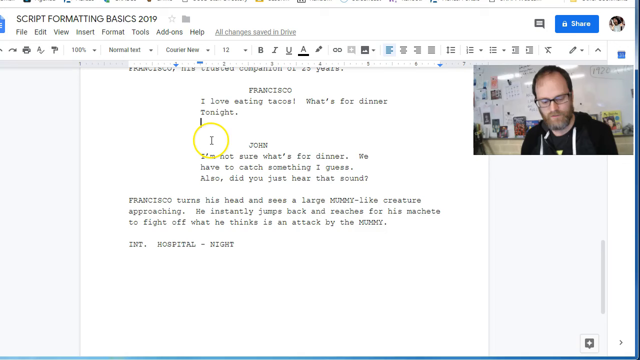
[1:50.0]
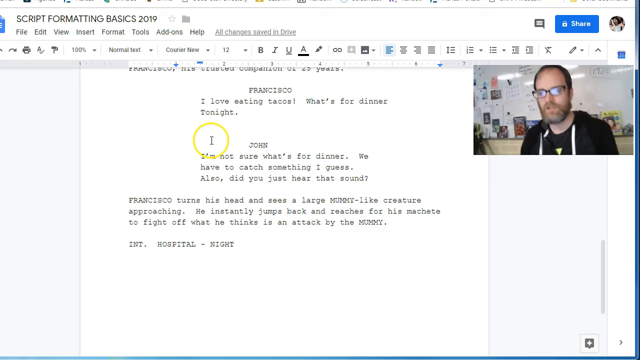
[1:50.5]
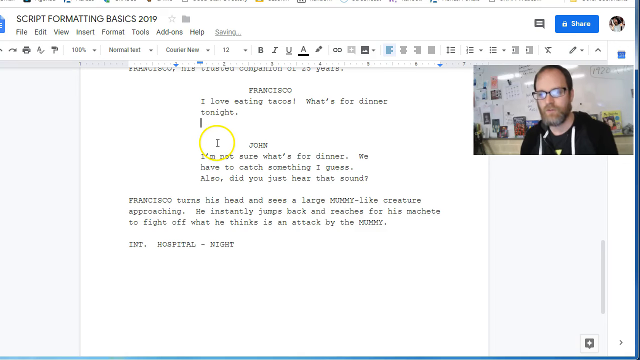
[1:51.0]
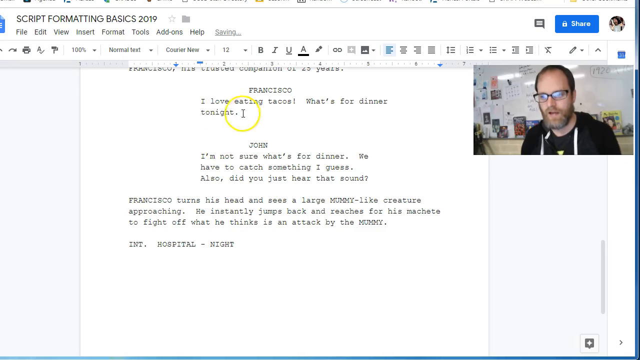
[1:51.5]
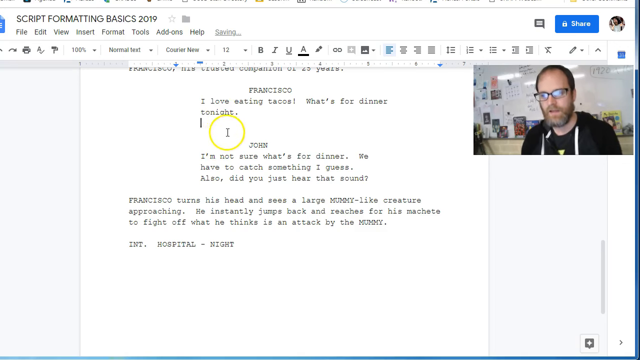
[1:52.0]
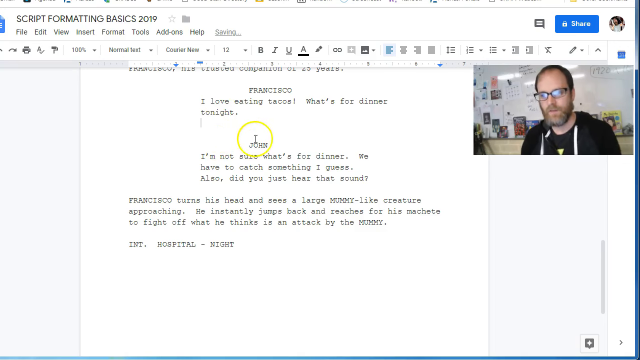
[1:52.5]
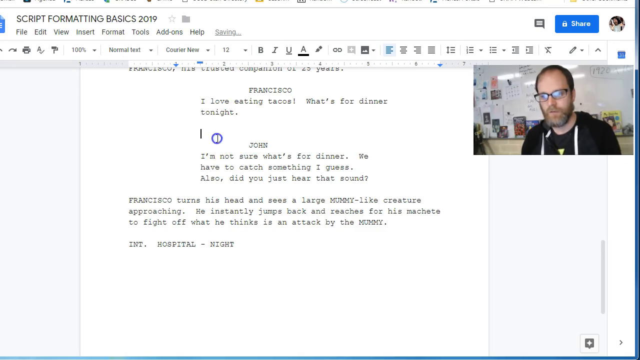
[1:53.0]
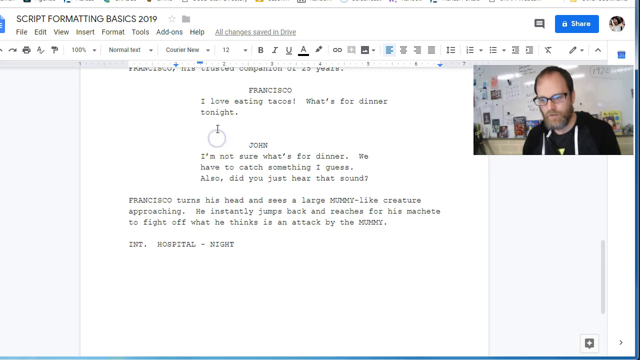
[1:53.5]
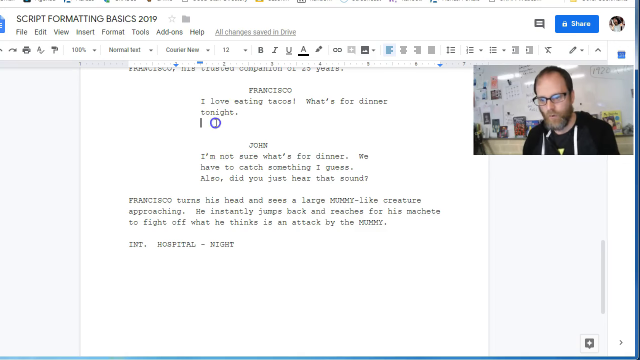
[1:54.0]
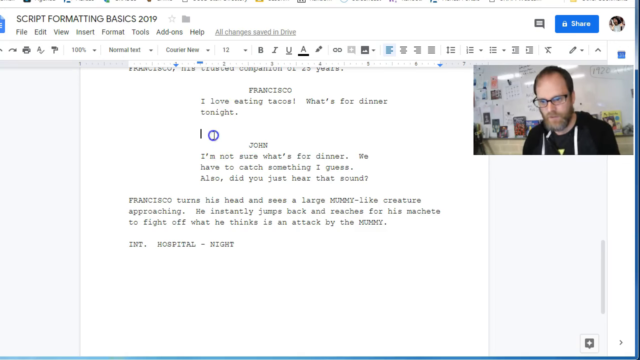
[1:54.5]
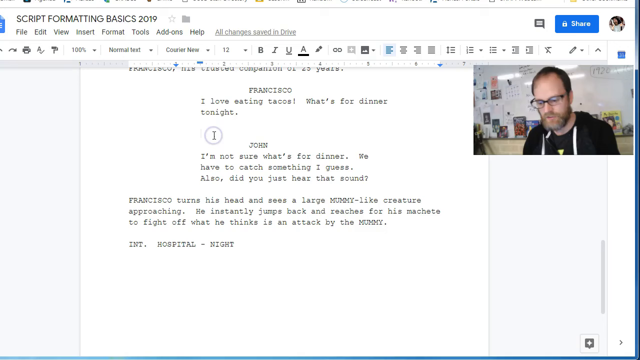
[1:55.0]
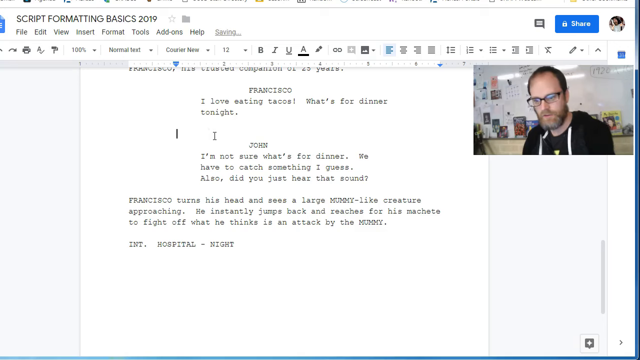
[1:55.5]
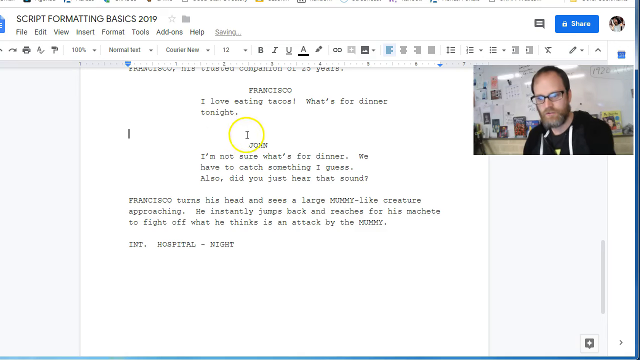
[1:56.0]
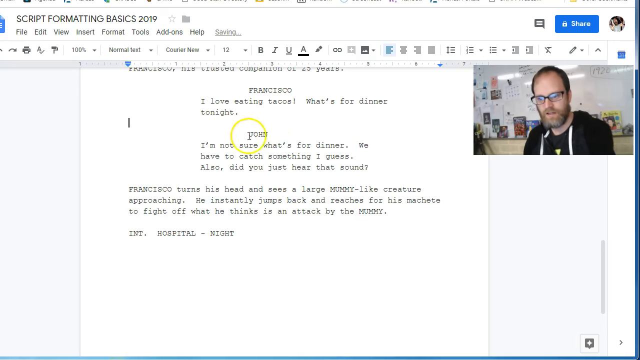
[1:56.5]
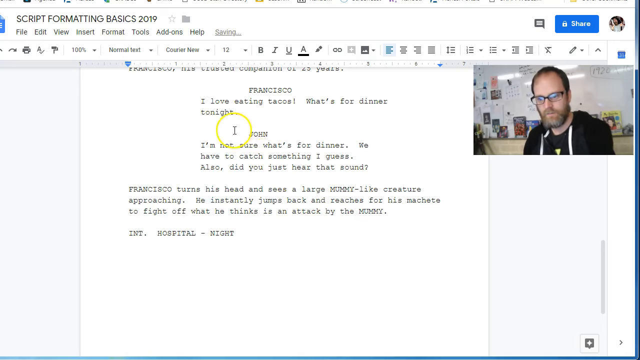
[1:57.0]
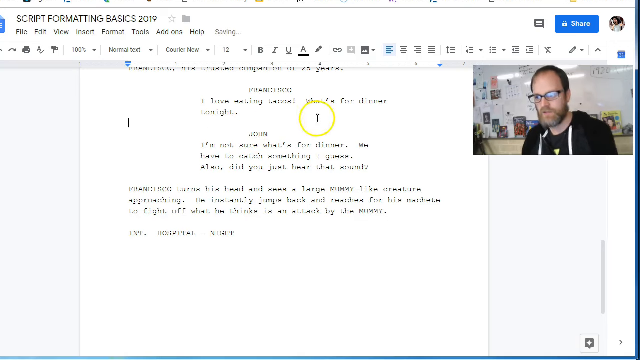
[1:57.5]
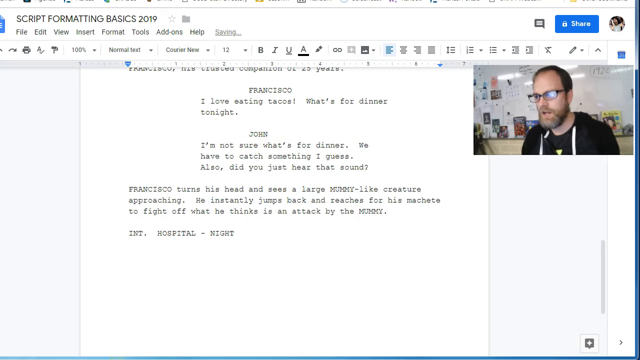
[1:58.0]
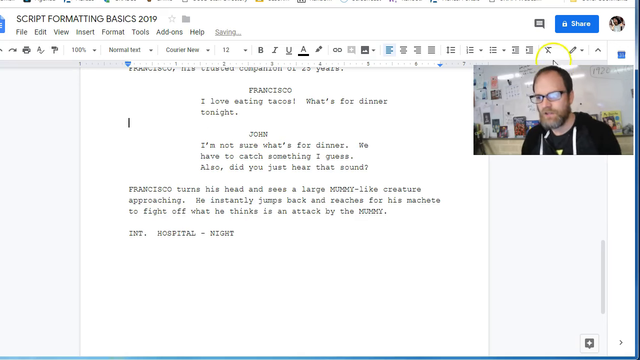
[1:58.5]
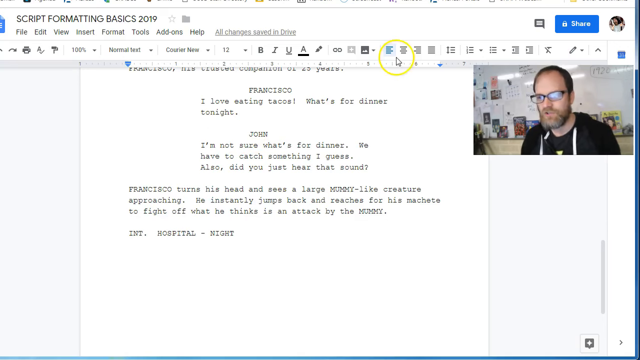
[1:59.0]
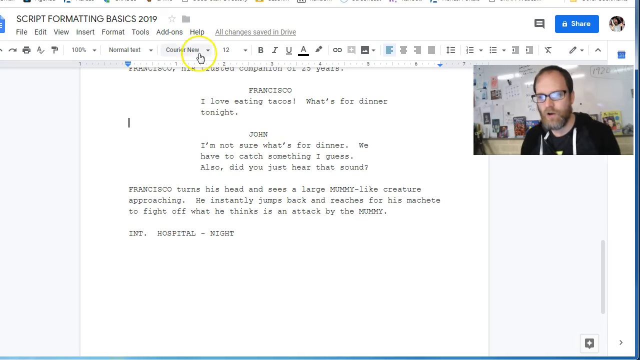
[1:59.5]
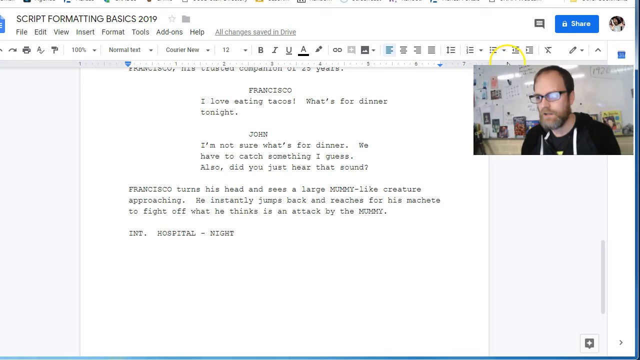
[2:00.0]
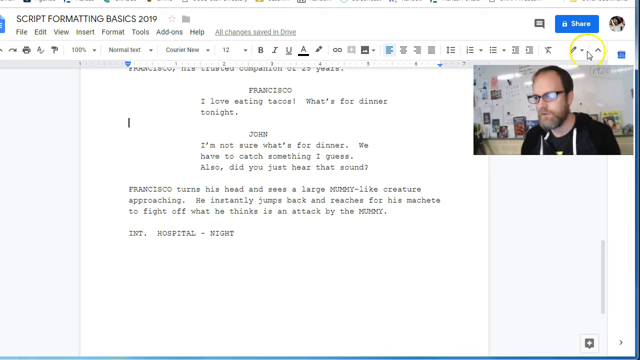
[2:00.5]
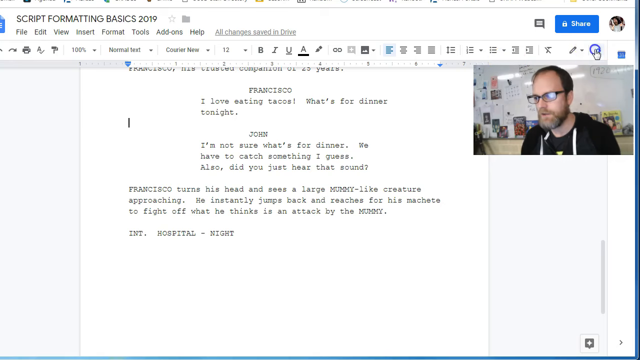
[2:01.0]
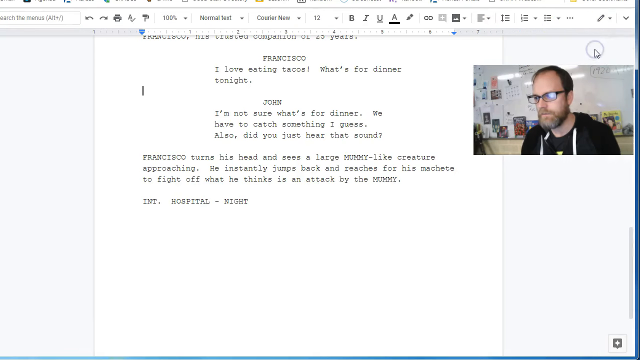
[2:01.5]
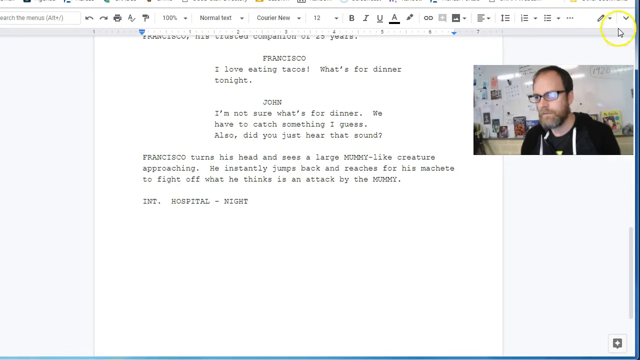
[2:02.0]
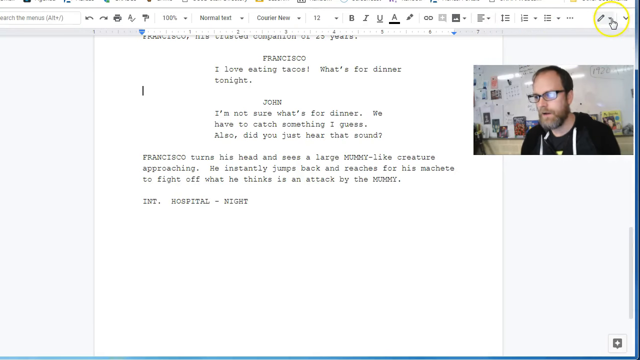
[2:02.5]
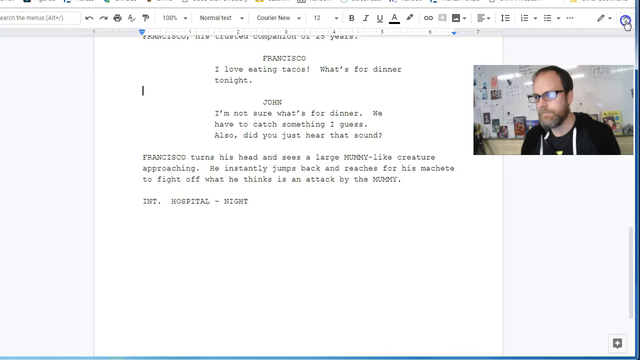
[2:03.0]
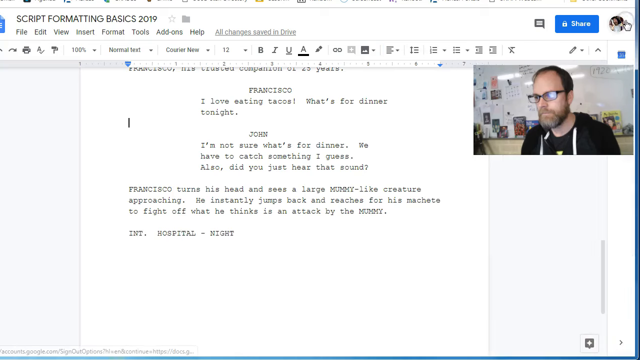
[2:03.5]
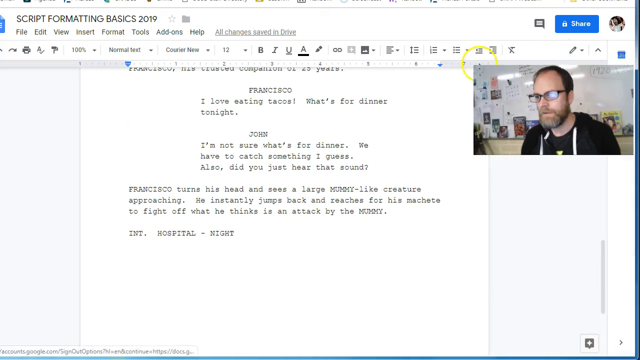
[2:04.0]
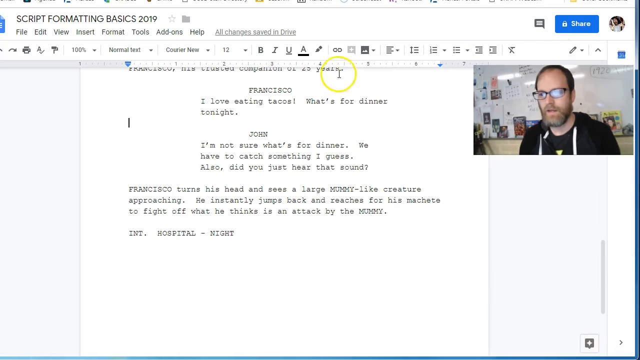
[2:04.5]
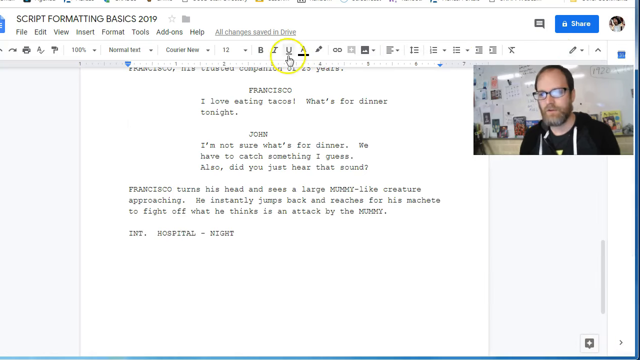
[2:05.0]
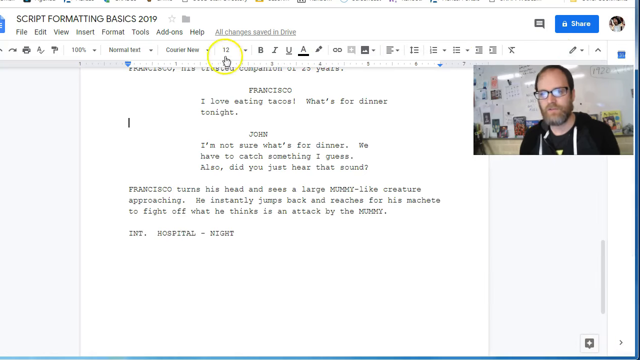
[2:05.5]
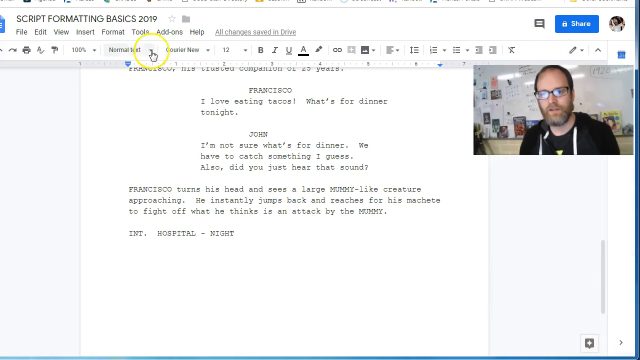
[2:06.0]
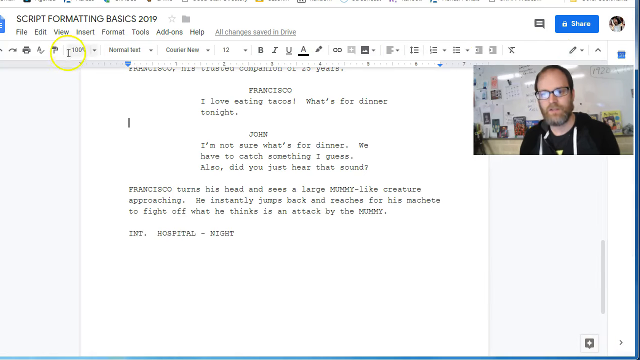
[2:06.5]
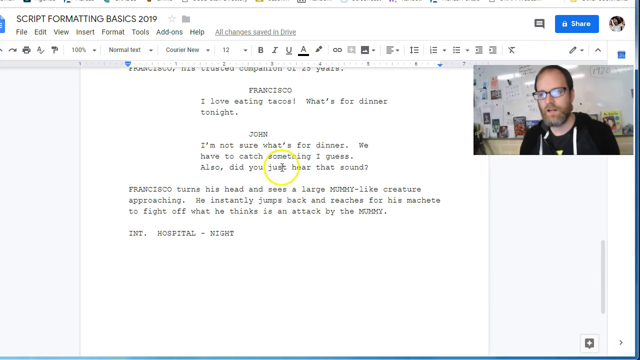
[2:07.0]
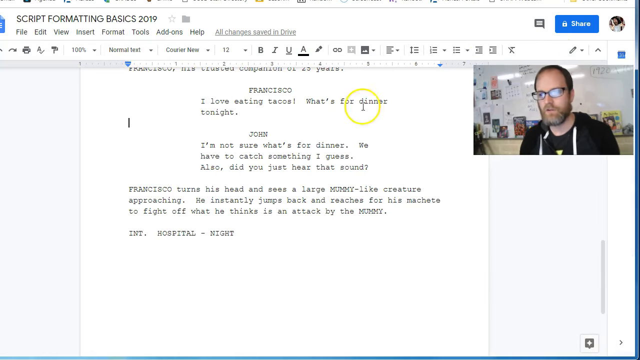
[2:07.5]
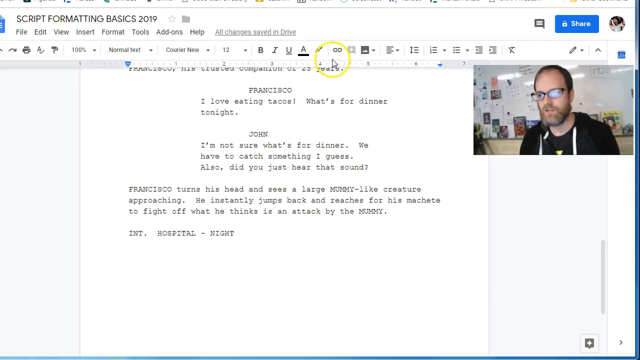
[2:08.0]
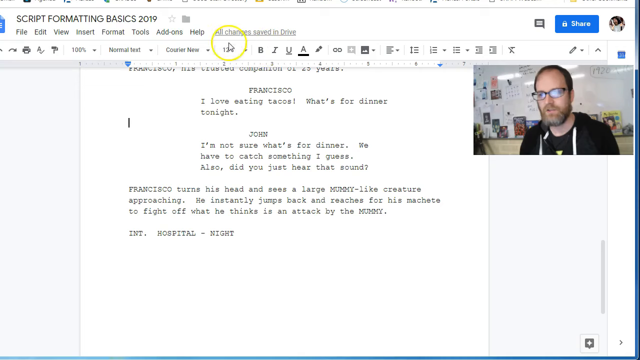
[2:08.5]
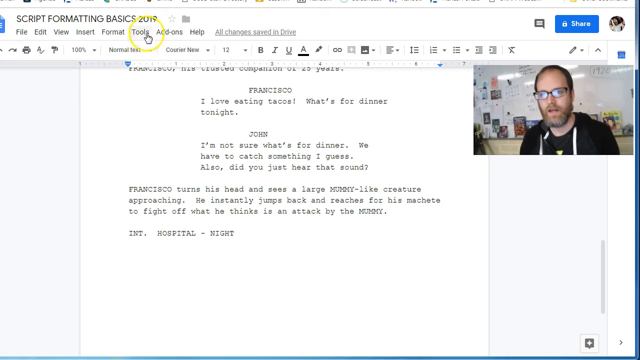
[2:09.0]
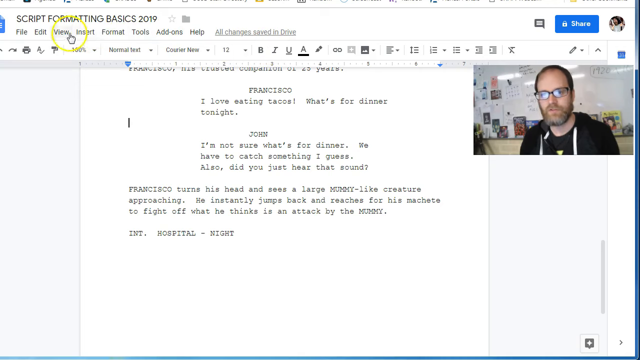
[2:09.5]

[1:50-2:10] "Francisco" is centered, indented at two and a half, and the "I love eating tacos" text beneath it is indented at one and a half, about a one-inch difference. After probably three spaces, "John" is indented at two and a half, aligned with "Francisco", so both name-and-text sets are aligned with one another. He clicks between the spaces and deletes one of the spaces between Francisco and John, after which "all changes saved" appears. He then clicks the pencil at the top and the slightly bigger drop-down arrow to its right; beneath it, in a black box, it says "show the menus" with a Ctrl shortcut in parentheses. He selects it and something changes, though it is unclear what. To the right of the document title at the top are a star and a gray folder.